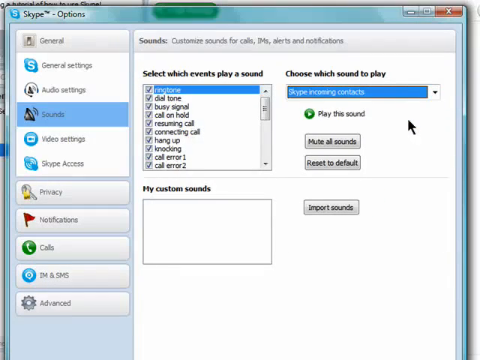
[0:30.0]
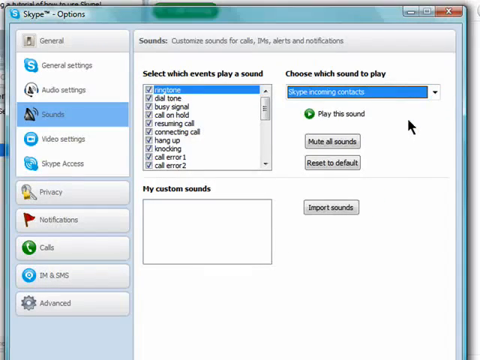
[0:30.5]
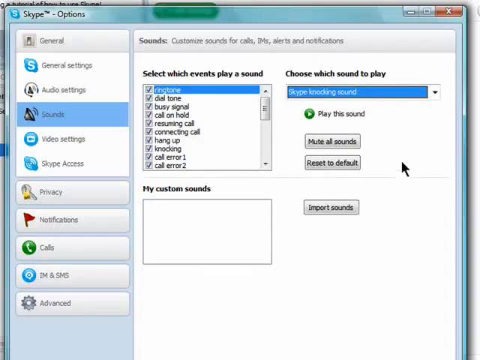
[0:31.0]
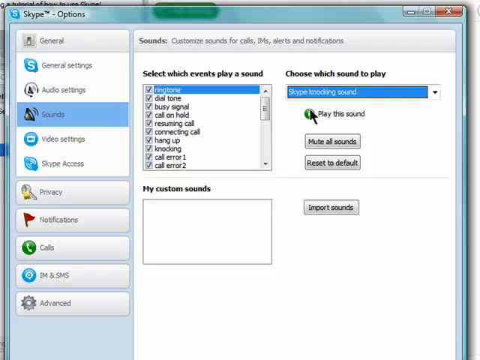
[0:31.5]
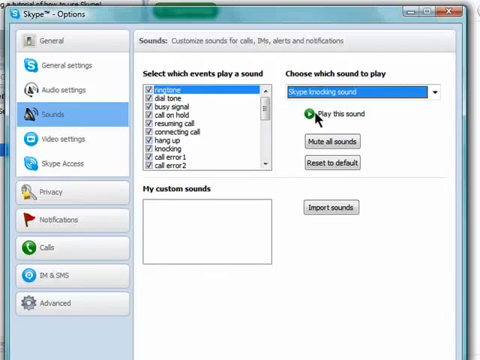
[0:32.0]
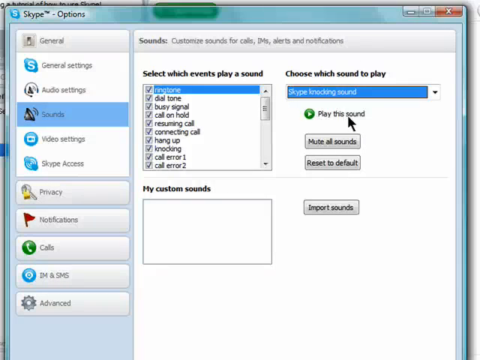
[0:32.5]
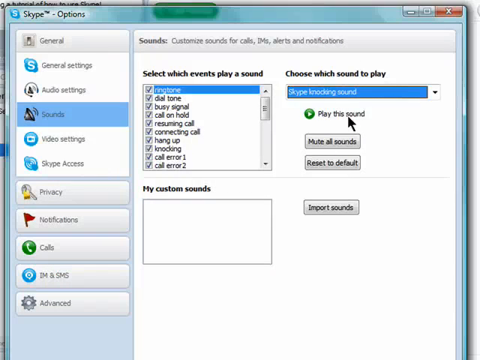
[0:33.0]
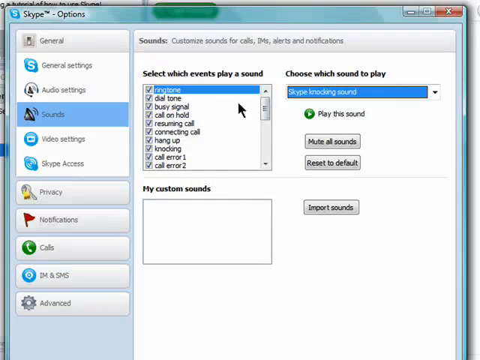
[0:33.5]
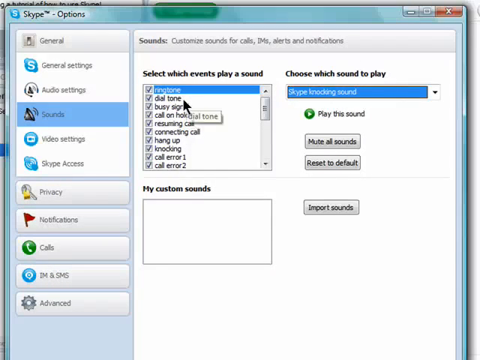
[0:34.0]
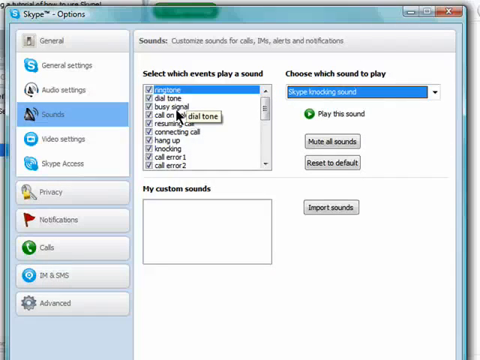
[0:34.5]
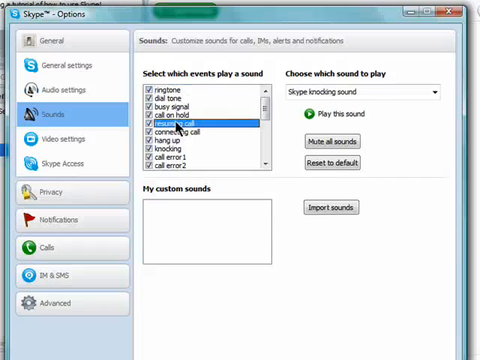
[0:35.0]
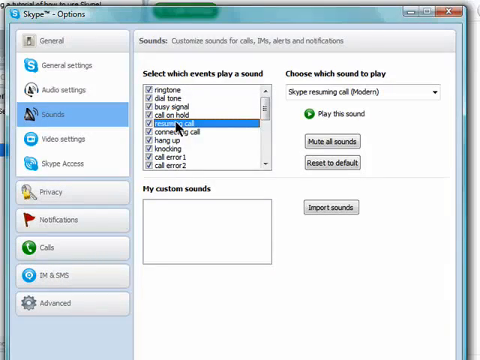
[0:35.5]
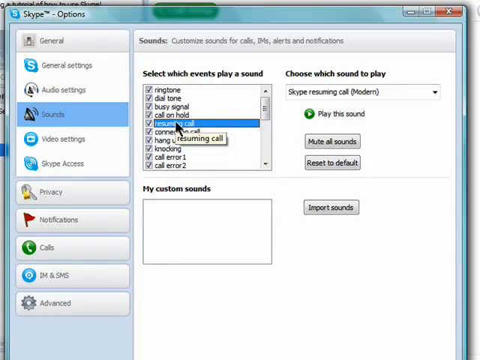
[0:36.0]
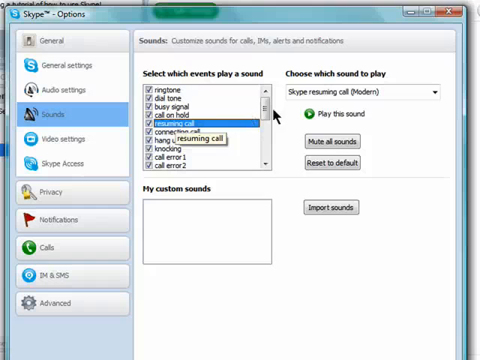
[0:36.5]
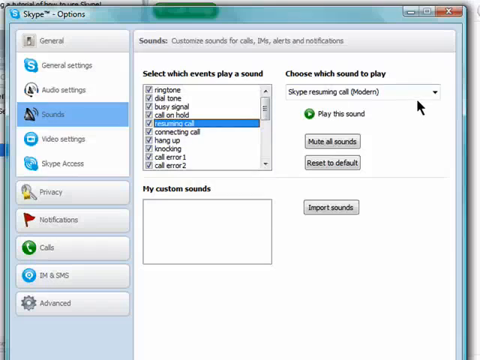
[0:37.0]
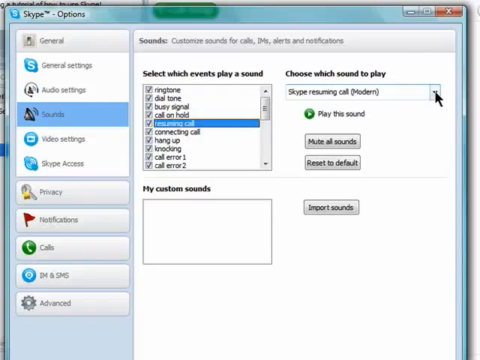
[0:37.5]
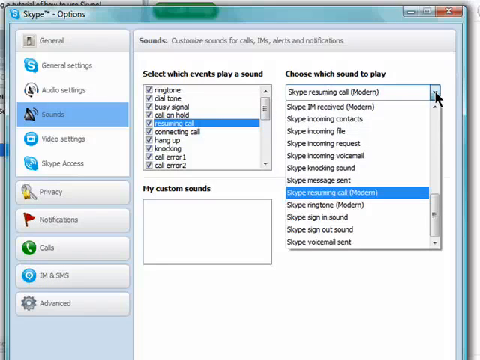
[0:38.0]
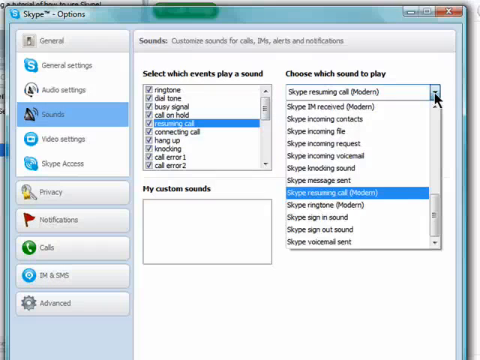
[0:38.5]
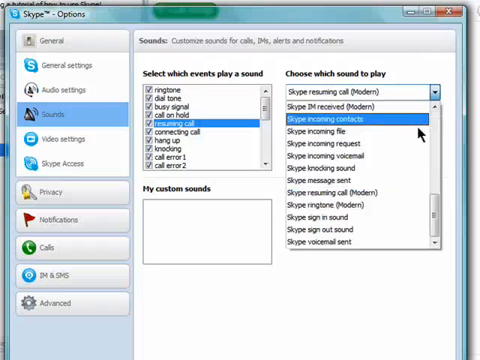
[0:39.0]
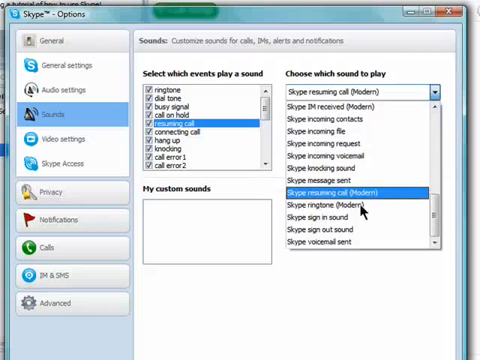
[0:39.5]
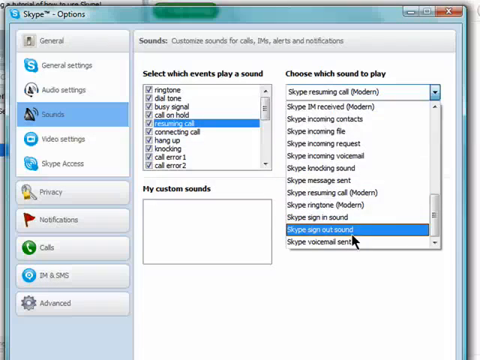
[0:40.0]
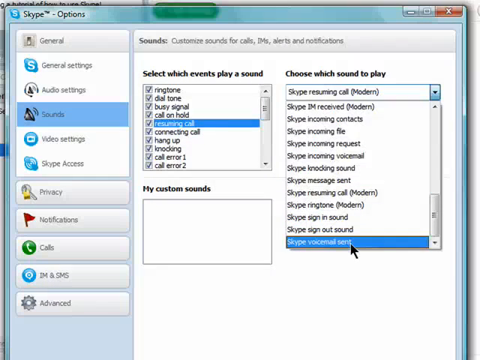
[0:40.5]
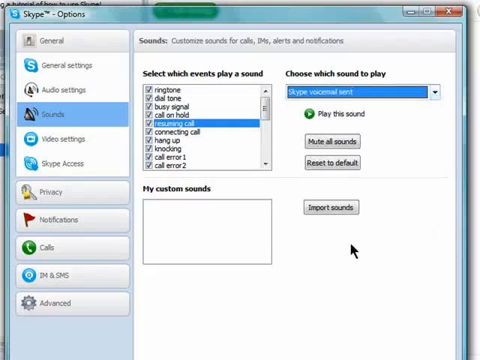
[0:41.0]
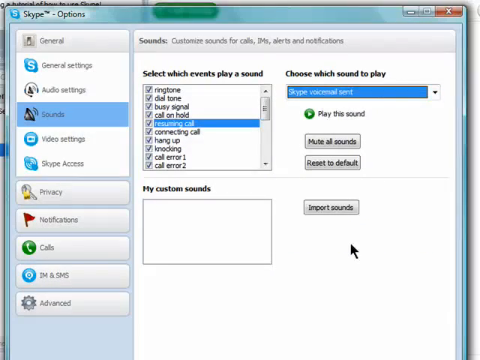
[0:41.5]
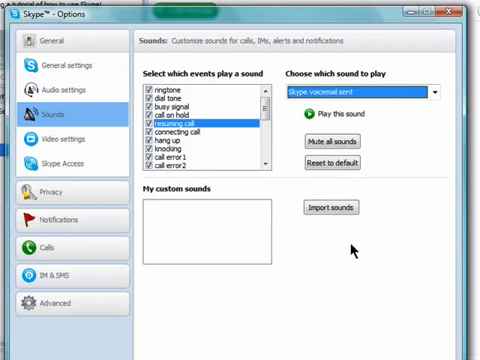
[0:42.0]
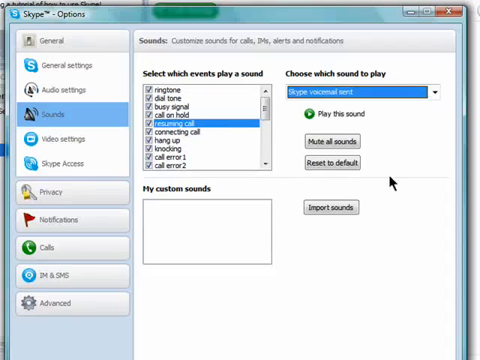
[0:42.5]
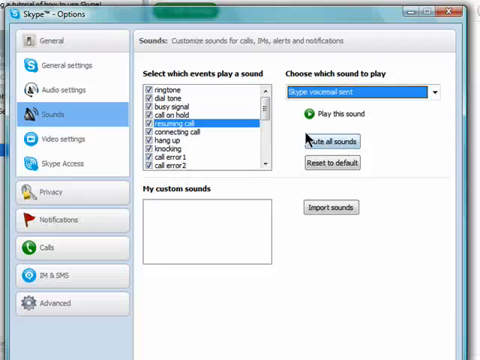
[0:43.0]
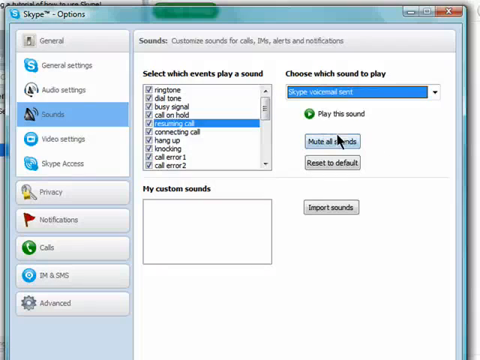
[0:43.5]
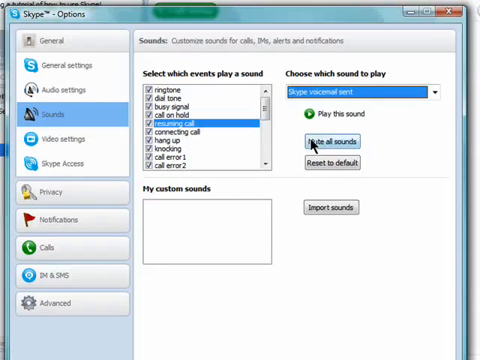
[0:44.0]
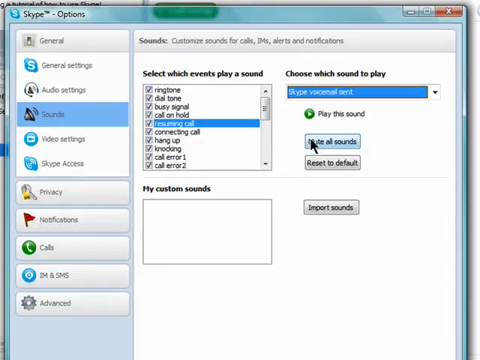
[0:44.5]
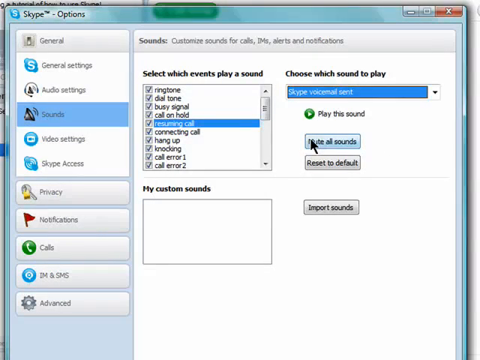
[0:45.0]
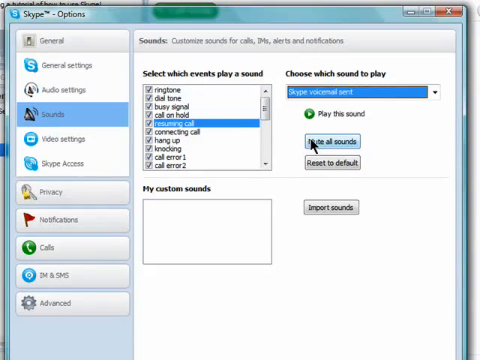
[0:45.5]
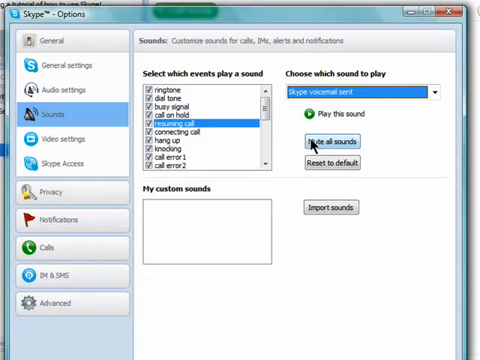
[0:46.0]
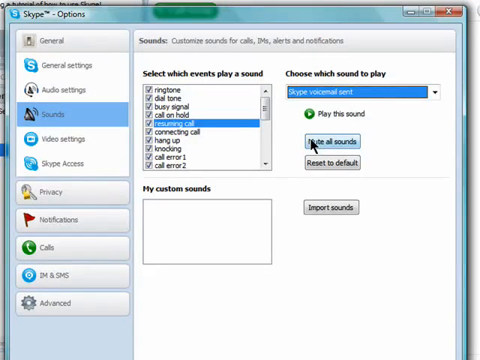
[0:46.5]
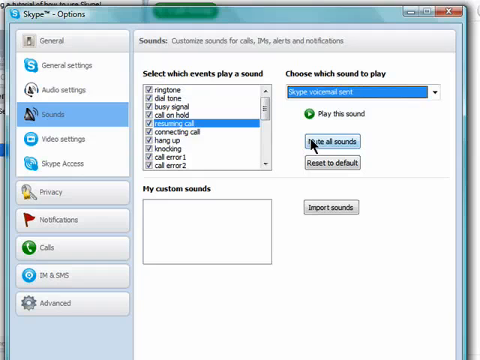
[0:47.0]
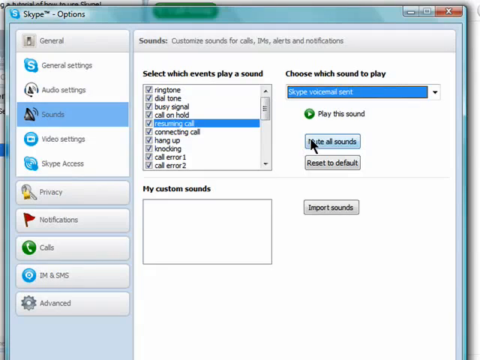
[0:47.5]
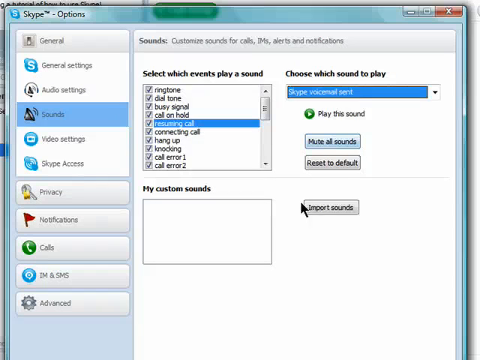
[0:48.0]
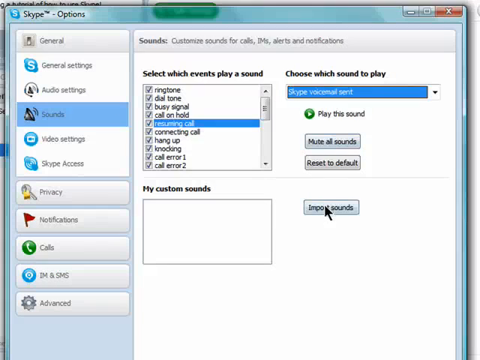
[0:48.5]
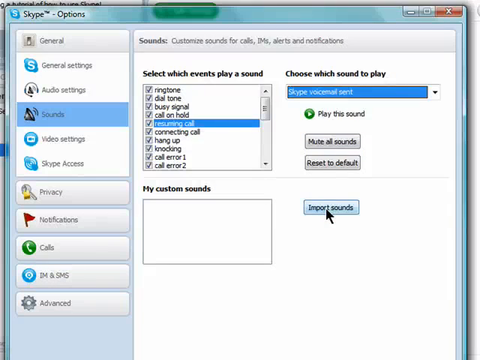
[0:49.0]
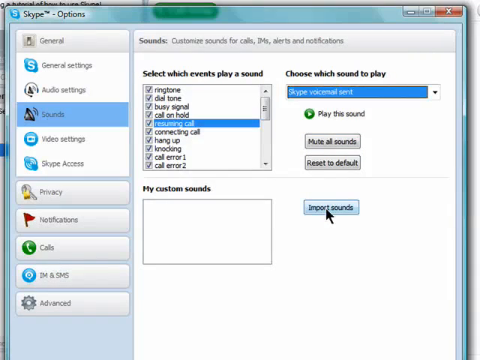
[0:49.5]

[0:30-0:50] The item selected from the drop-down menu says "Skype incoming contacts", and it is now the one item showing in the field labeled "Choose which sound to play". On the left, "ringtone" is highlighted in blue. The cursor hovers for a moment beneath the selected sound, pointing to a green circle with a white arrow labeled "Play the sound"; it does not seem to click it. The cursor then goes left to the menu of events and clicks incoming call, which gets a blue background without its check mark being deselected. On the right, it opens the drop-down menu and chooses one of the last items listed, "Skype voicemail sent", choosing which sound to make for each event on the left. The arrow hangs around beneath that area for a bit, near a button that says "Mute all sounds" and, beneath it, a button that says "Reset to default"; it apparently does not click either one. Further down is a button that says "Import sounds", which the cursor hovers around, apparently without clicking it.